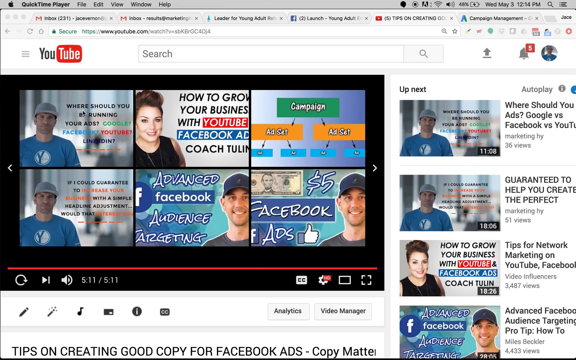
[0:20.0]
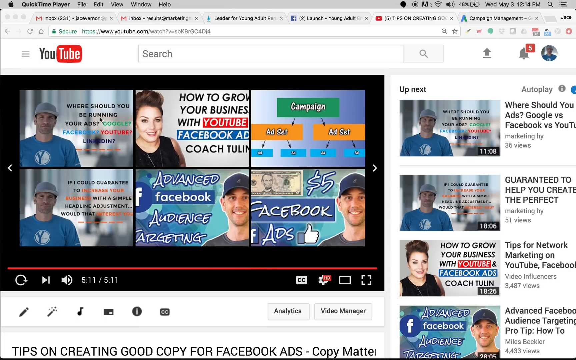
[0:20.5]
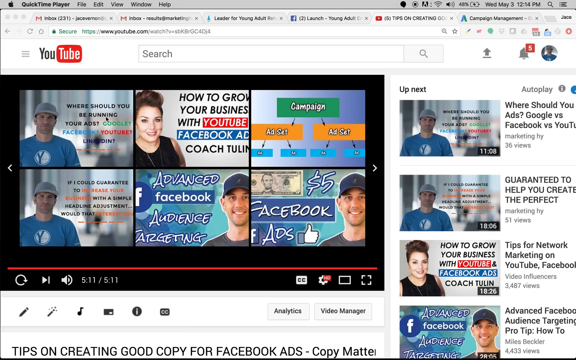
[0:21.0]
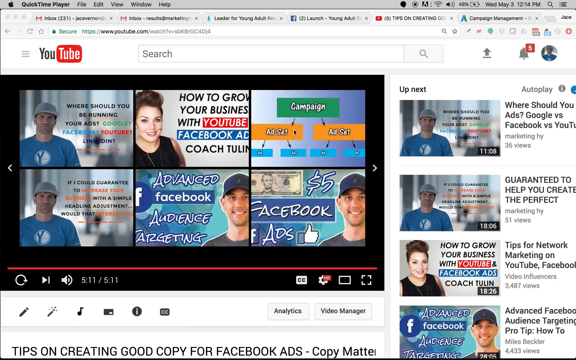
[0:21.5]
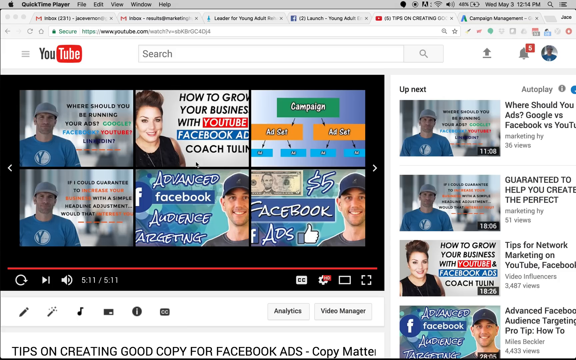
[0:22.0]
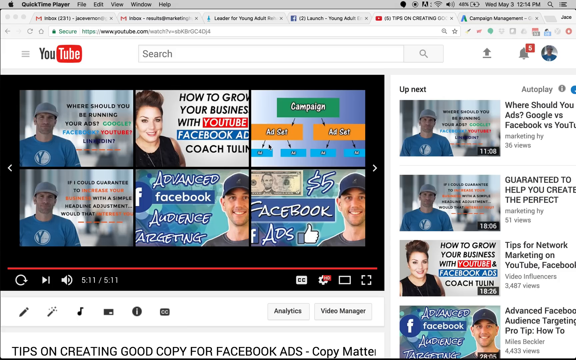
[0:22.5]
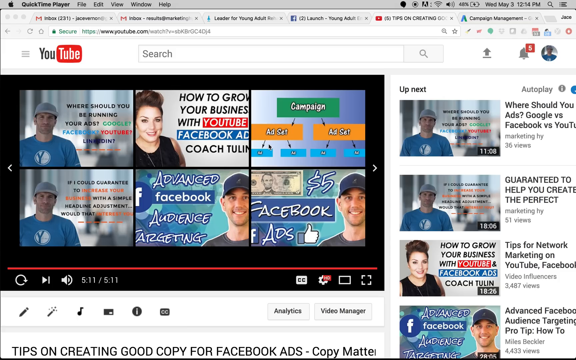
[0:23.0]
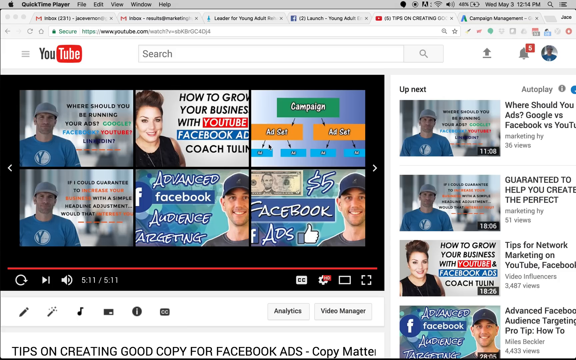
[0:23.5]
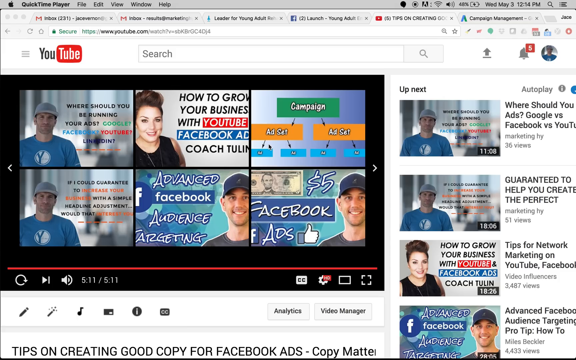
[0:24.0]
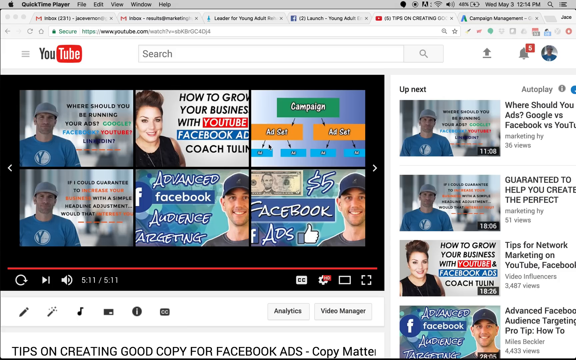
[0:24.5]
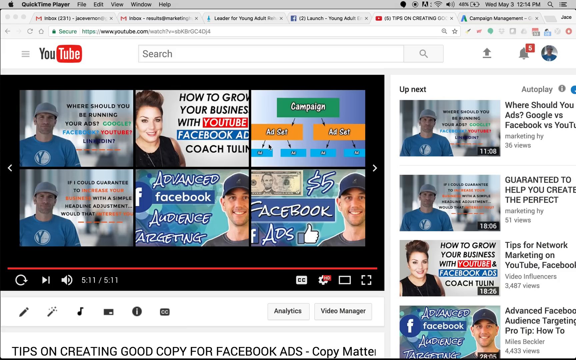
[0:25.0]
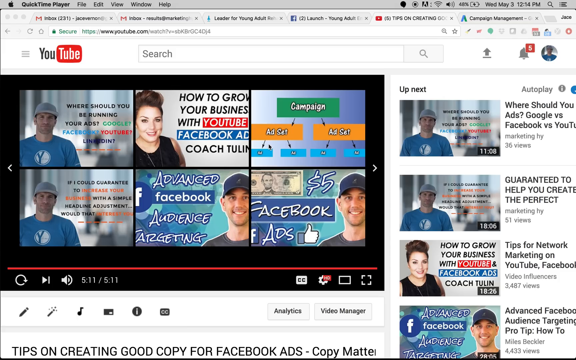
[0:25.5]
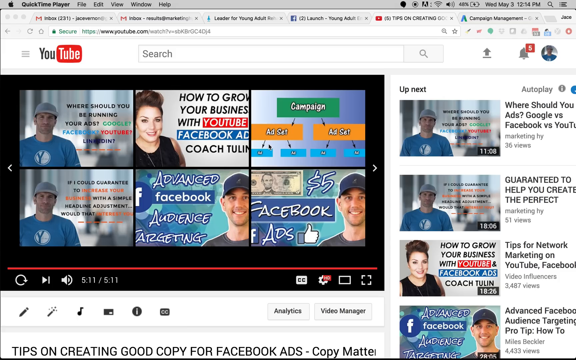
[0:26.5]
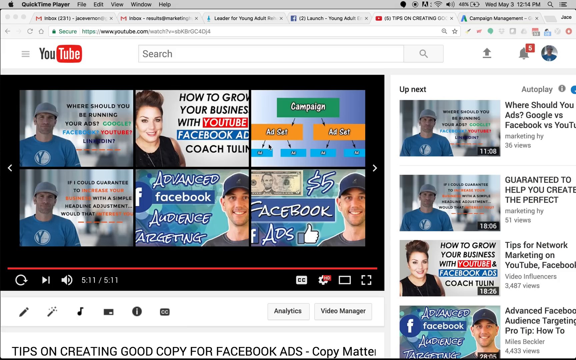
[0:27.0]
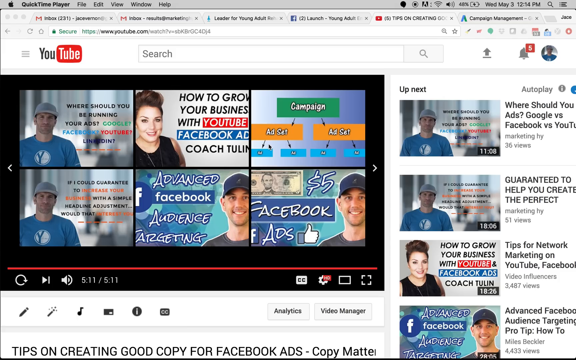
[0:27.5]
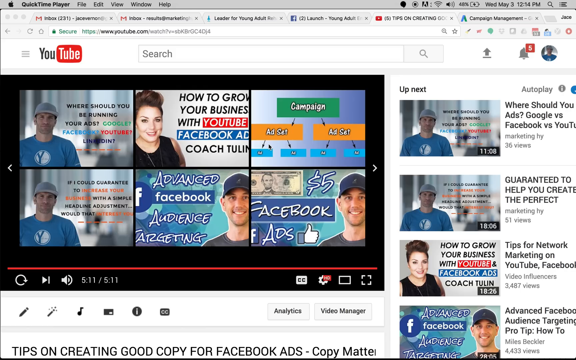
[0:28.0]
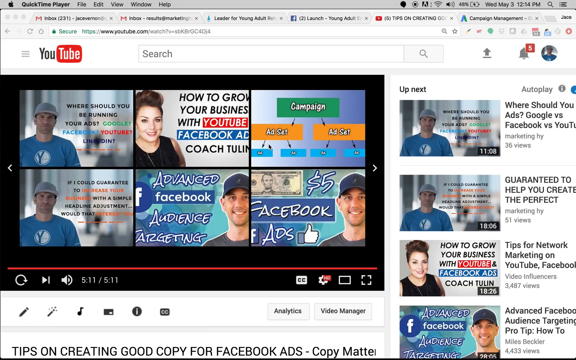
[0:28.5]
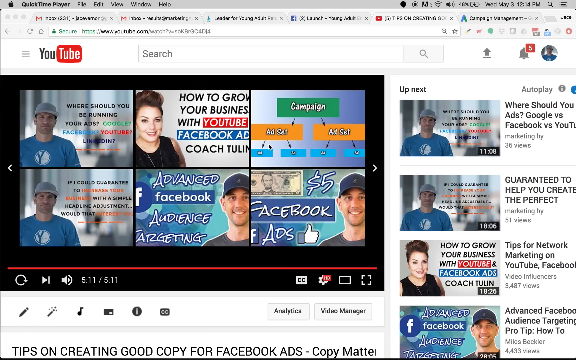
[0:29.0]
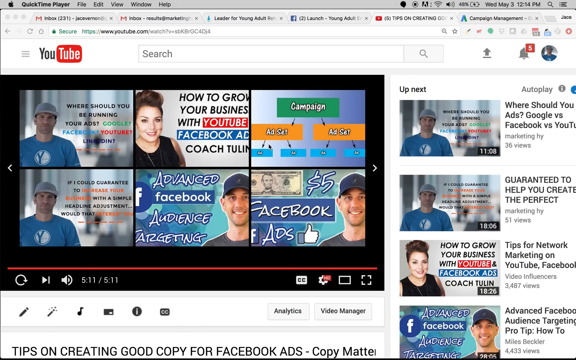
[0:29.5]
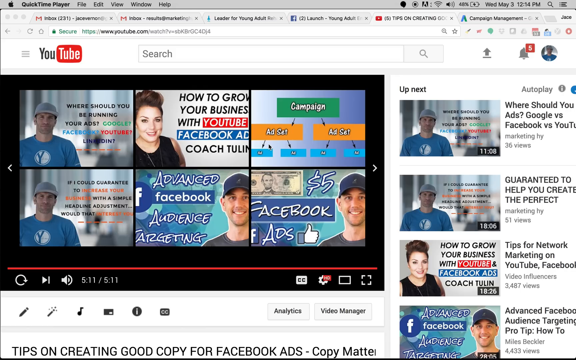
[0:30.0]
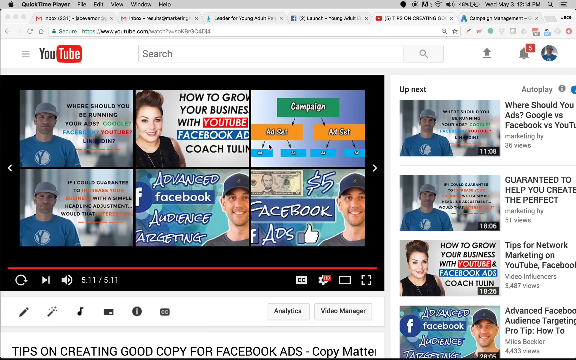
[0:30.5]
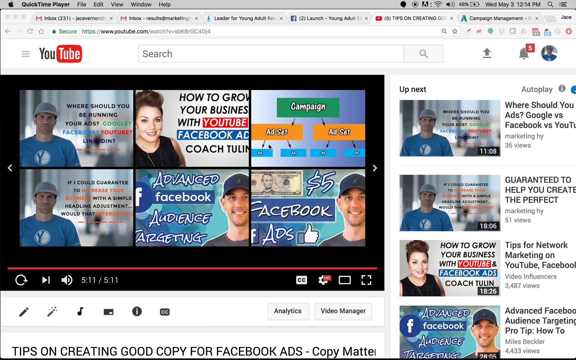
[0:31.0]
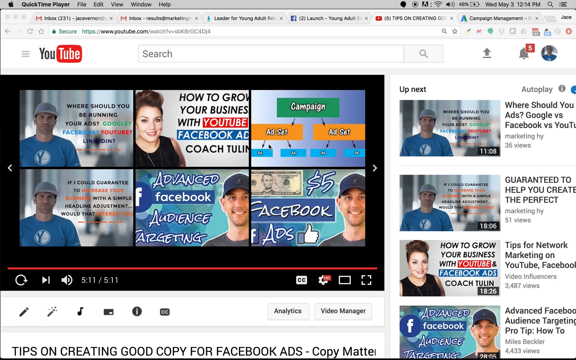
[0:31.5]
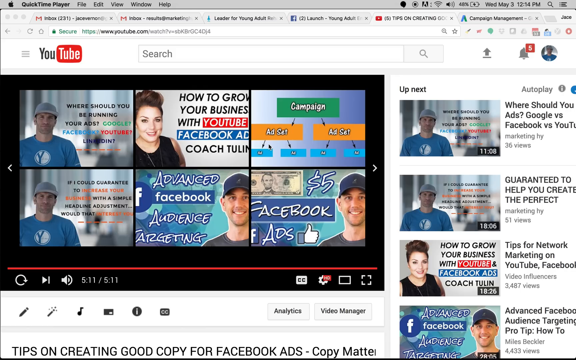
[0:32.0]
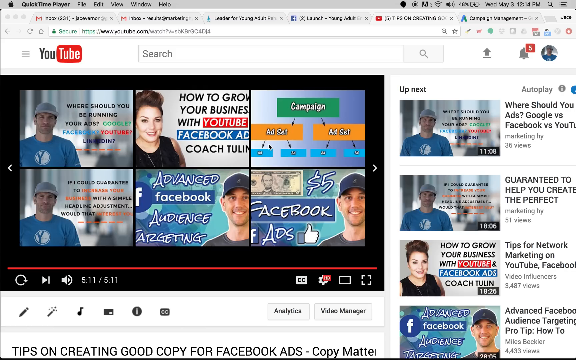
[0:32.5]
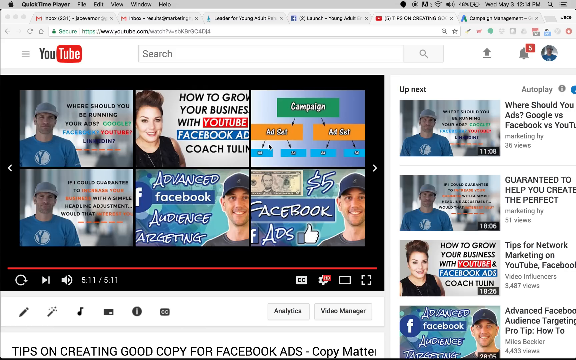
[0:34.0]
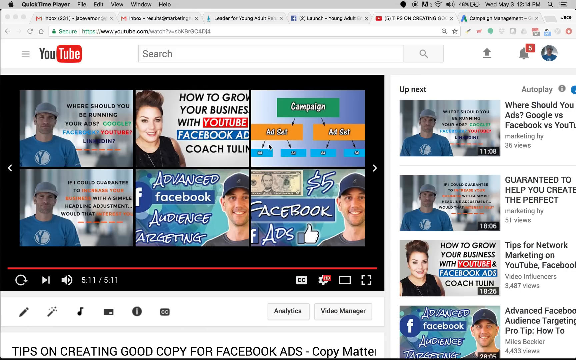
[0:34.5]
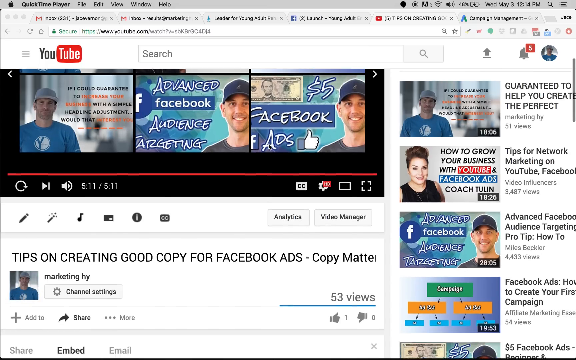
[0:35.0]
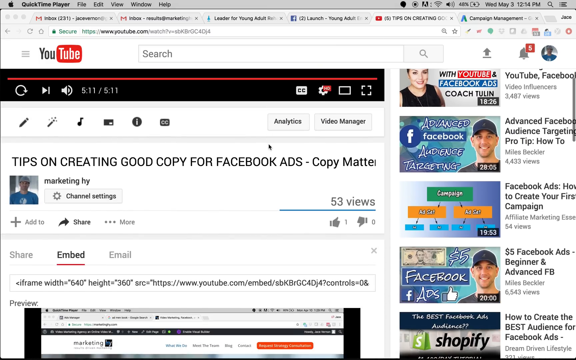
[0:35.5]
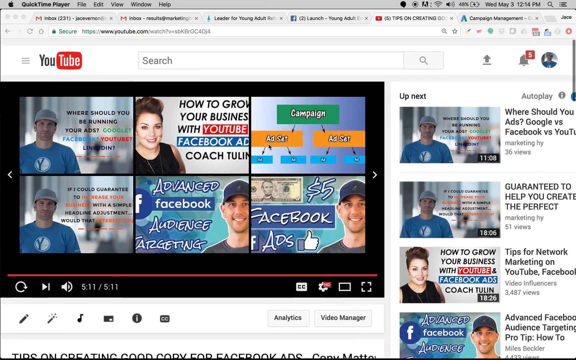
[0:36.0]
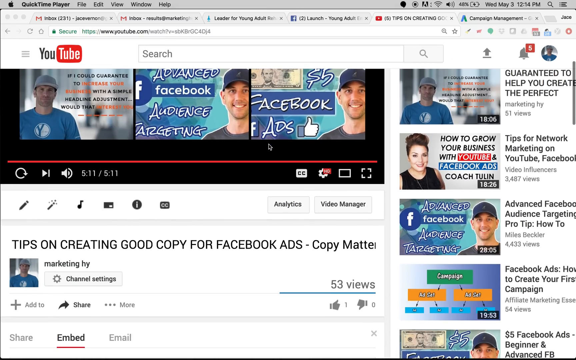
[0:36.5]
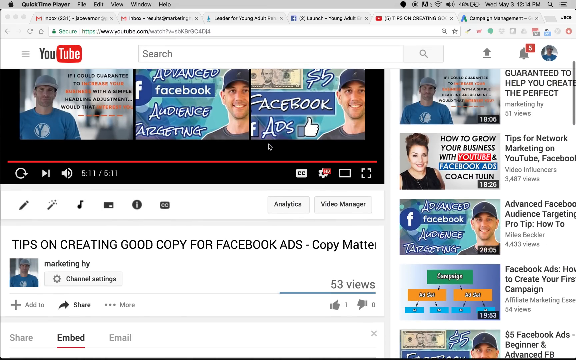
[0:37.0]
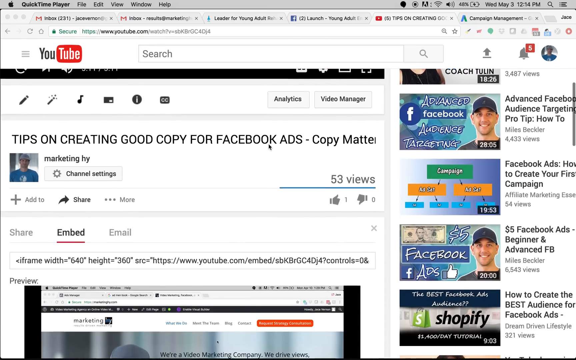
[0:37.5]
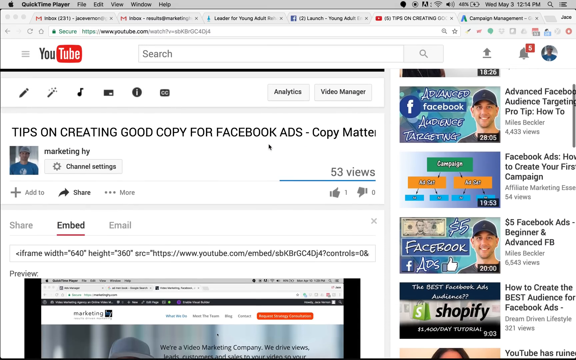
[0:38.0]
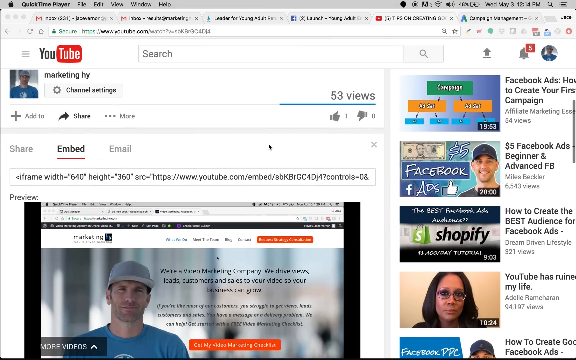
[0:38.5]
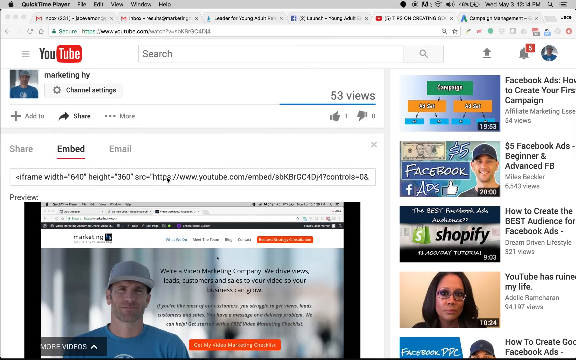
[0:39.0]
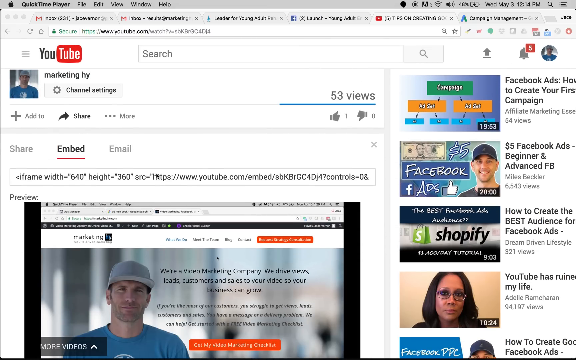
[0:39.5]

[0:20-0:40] A computer screen shows a chosen YouTube video that appears to be about growing a business with YouTube, Facebook advertising and Facebook targeting. What is coming up next is listed on the right-hand side. The person scrolls and clicks the Share button. They appear to be finding a video with tips on creating good copy for Facebook advertising, and are sharing it from their computer. The chosen video is 5 minutes and 11 seconds long and is called "tips on creating good copy for Facebook ads". The text "copy Mateo" appears, with the rest of the name hard to see, followed by "marketing by Mateo" and "thank you for watching".